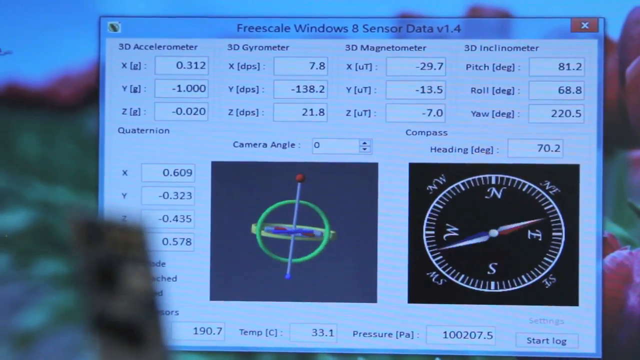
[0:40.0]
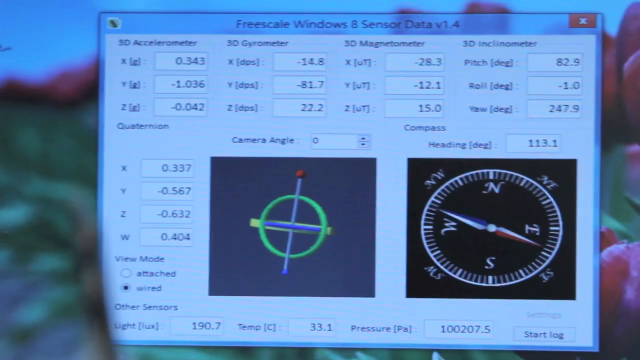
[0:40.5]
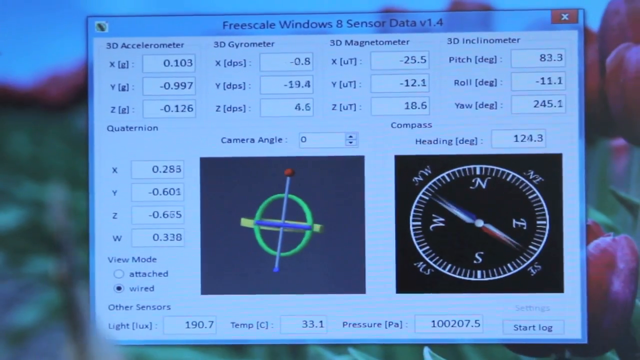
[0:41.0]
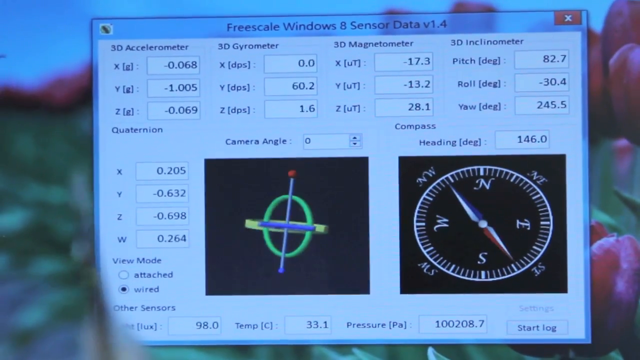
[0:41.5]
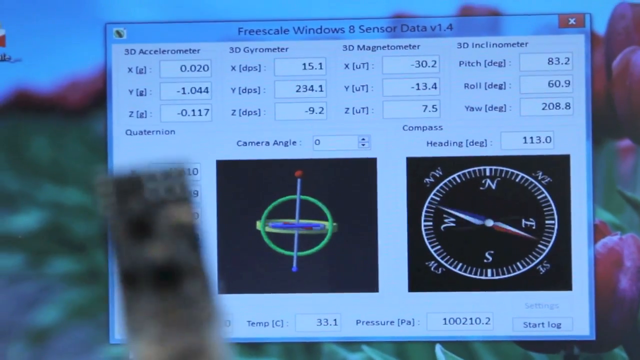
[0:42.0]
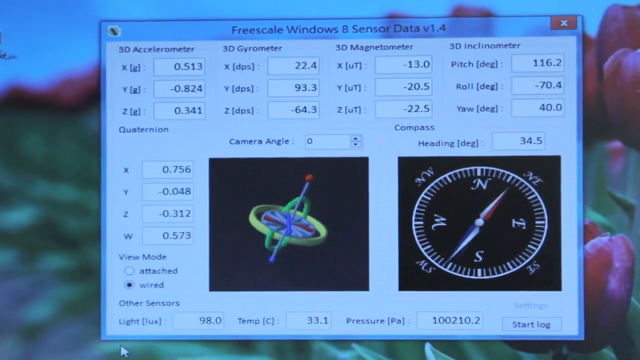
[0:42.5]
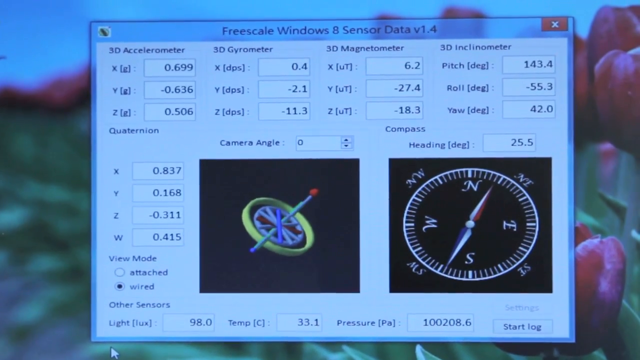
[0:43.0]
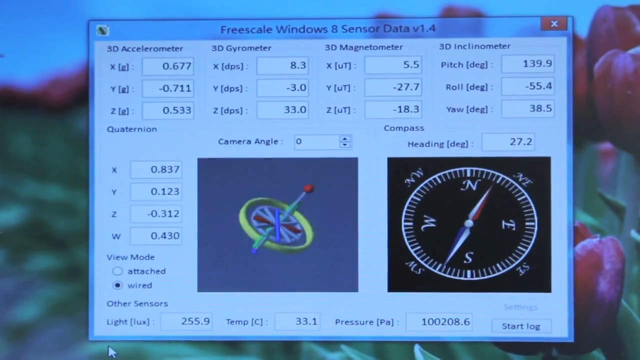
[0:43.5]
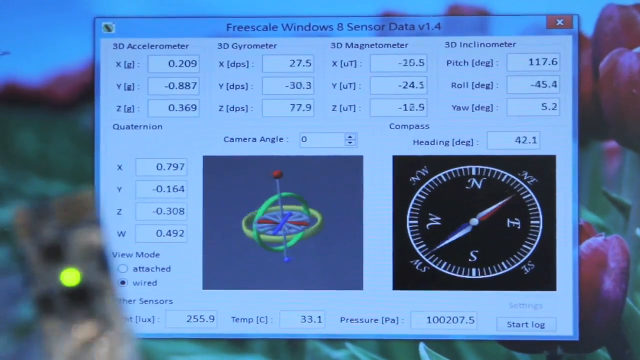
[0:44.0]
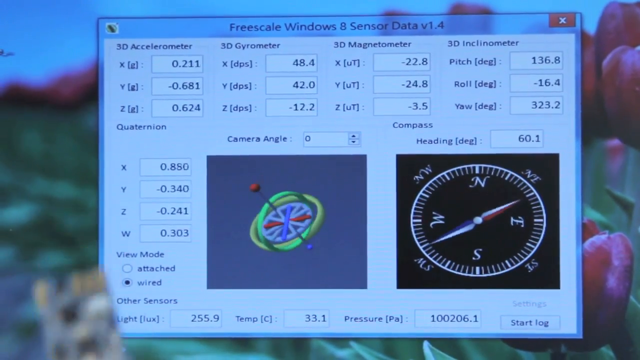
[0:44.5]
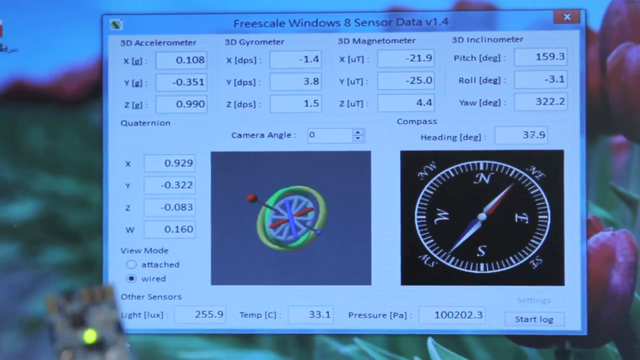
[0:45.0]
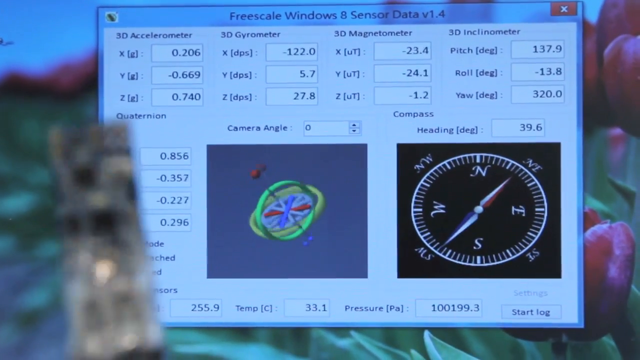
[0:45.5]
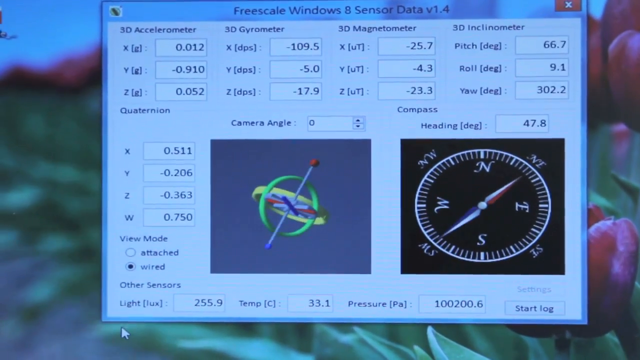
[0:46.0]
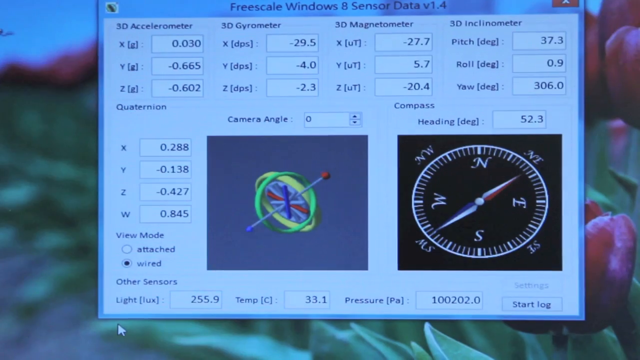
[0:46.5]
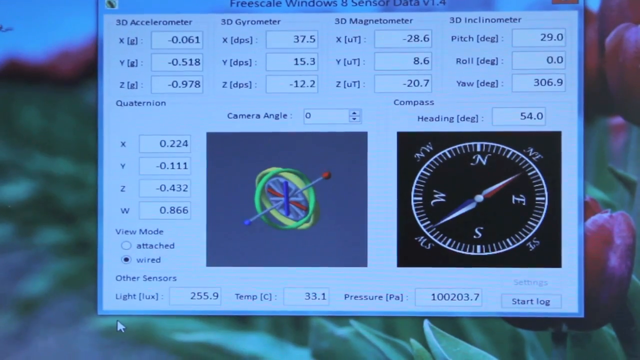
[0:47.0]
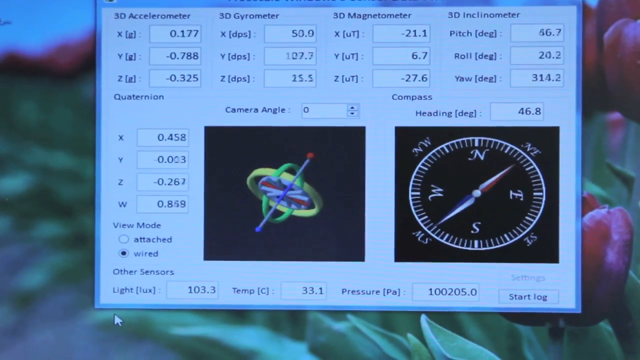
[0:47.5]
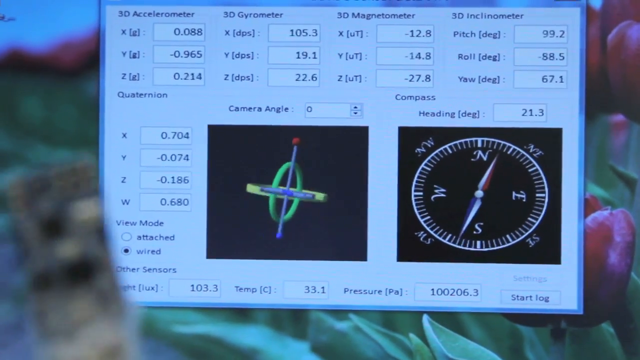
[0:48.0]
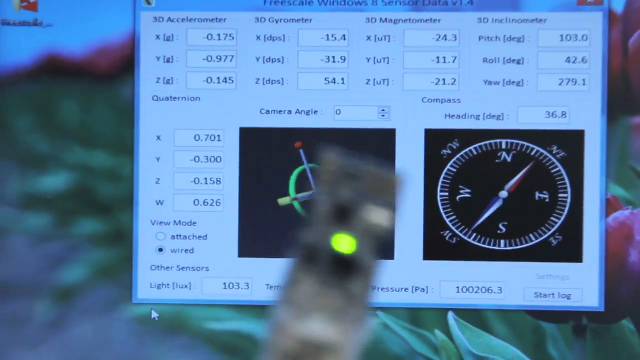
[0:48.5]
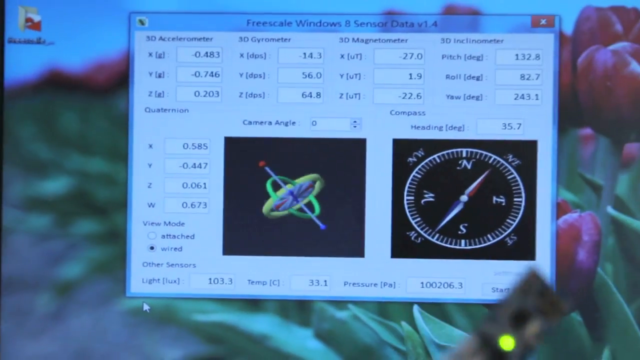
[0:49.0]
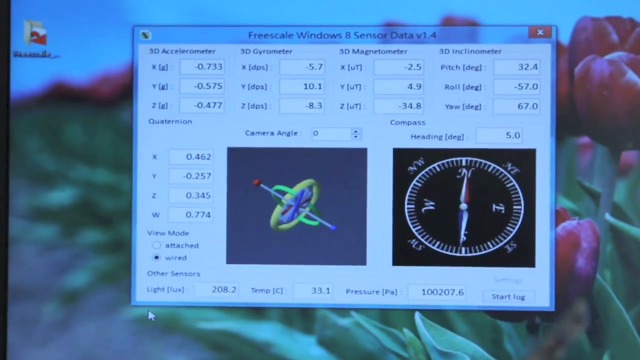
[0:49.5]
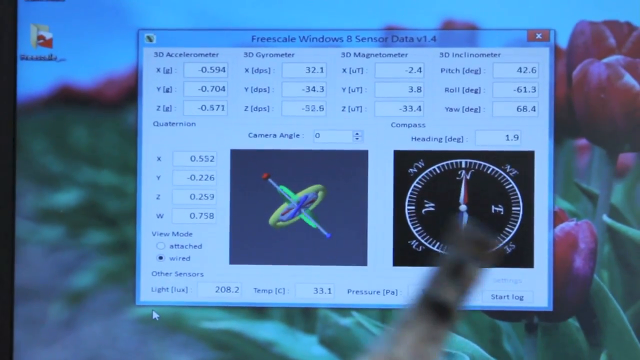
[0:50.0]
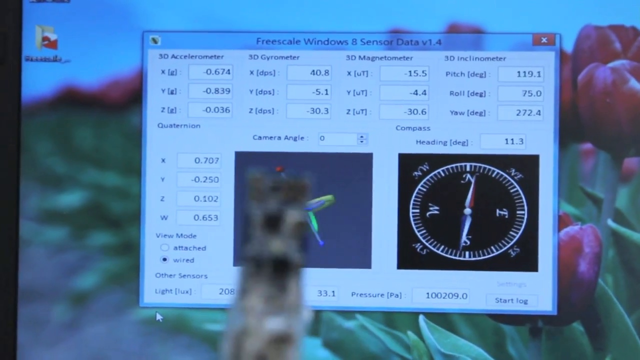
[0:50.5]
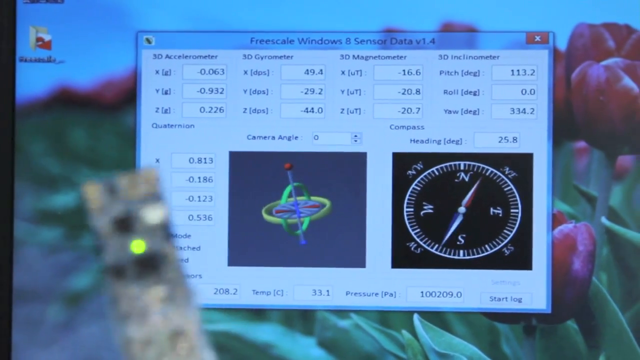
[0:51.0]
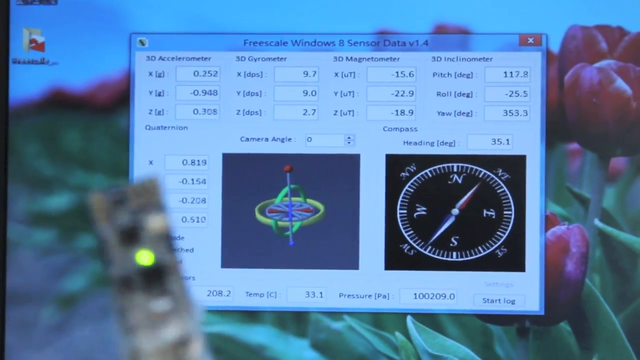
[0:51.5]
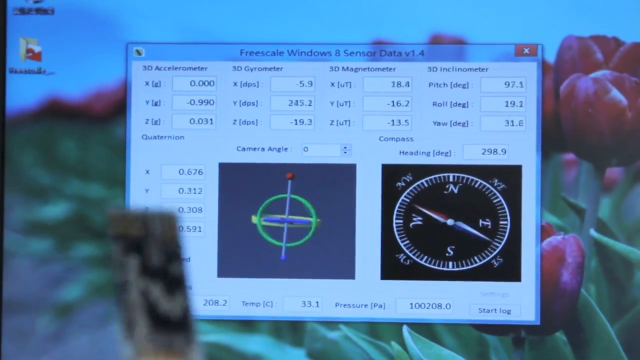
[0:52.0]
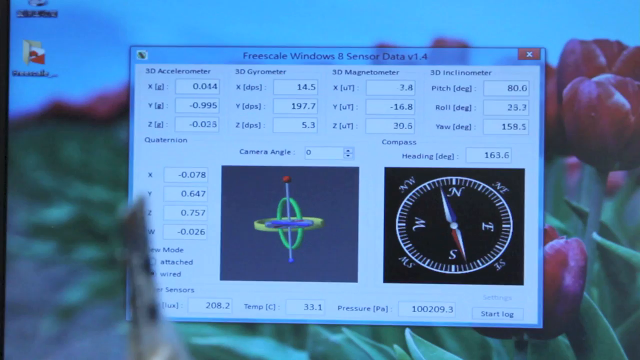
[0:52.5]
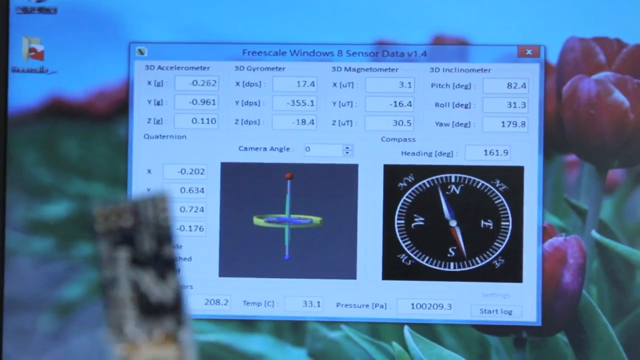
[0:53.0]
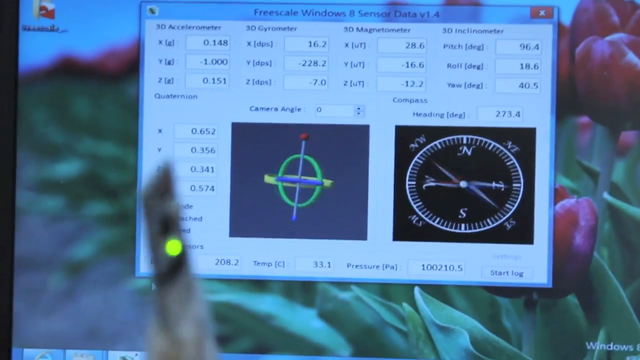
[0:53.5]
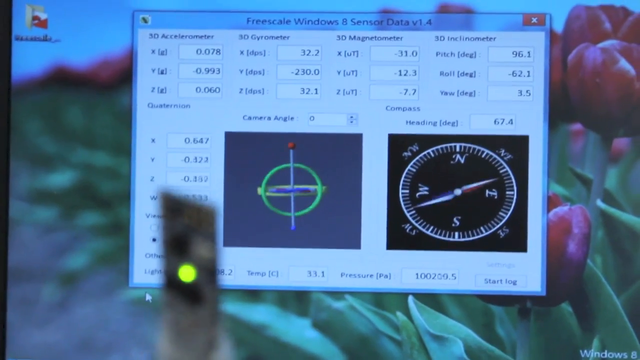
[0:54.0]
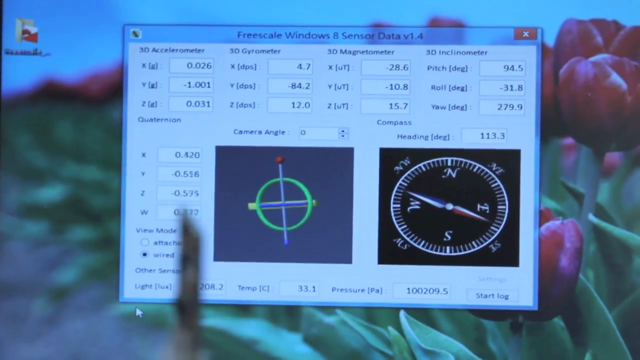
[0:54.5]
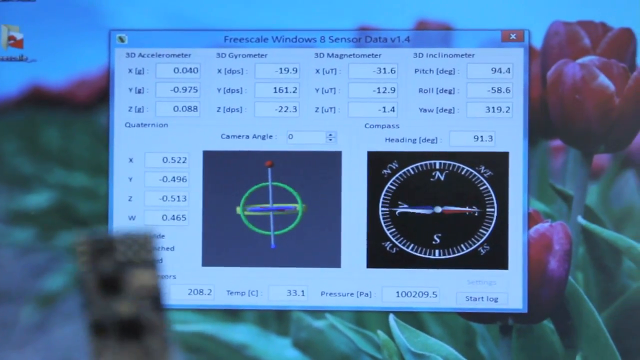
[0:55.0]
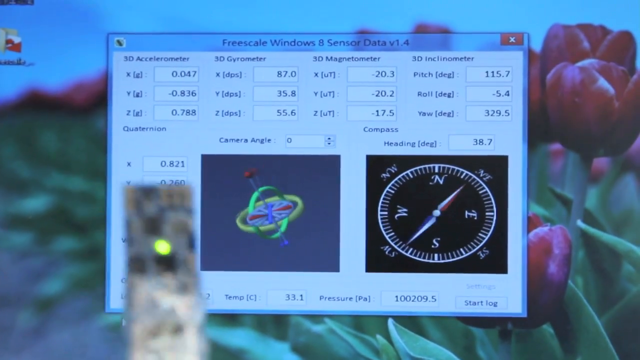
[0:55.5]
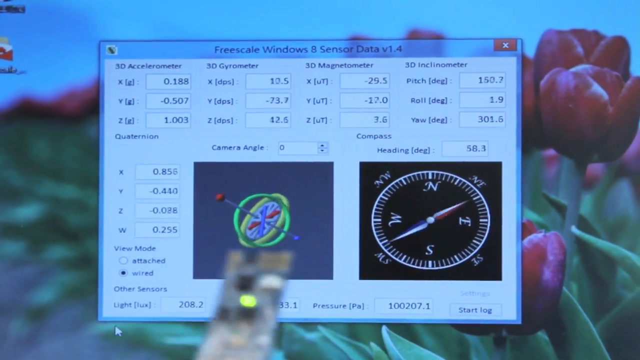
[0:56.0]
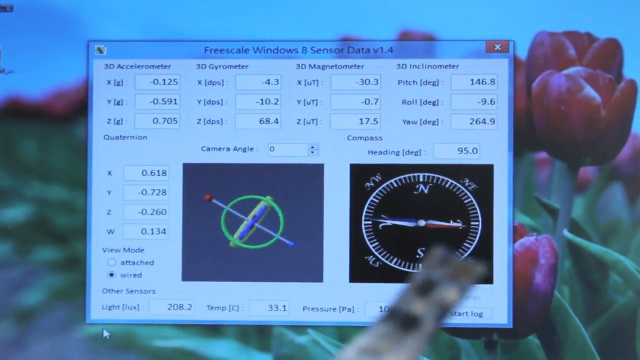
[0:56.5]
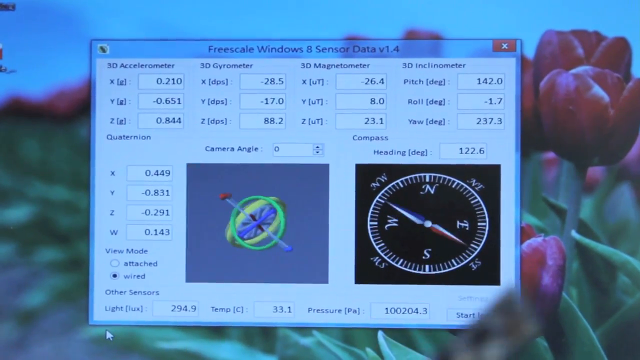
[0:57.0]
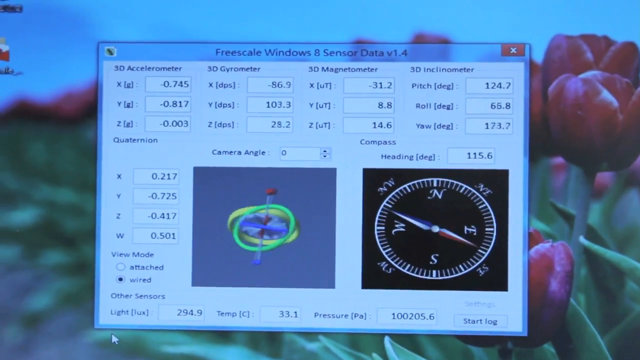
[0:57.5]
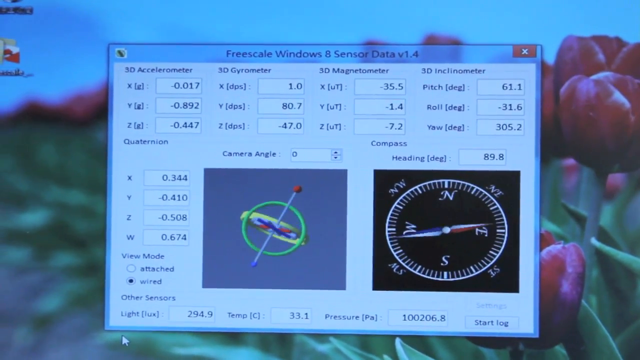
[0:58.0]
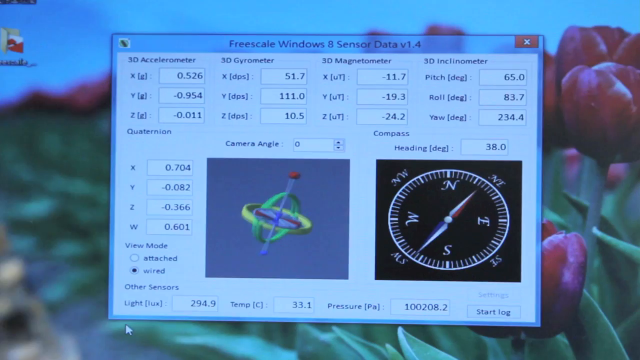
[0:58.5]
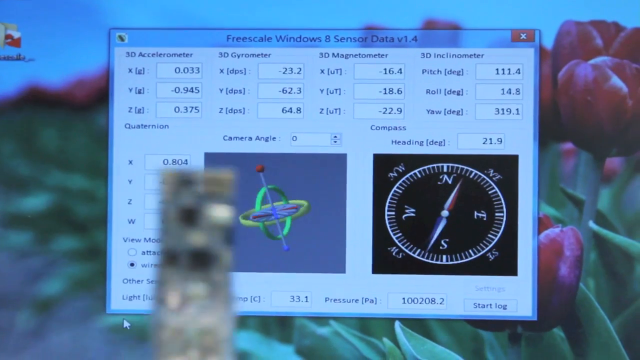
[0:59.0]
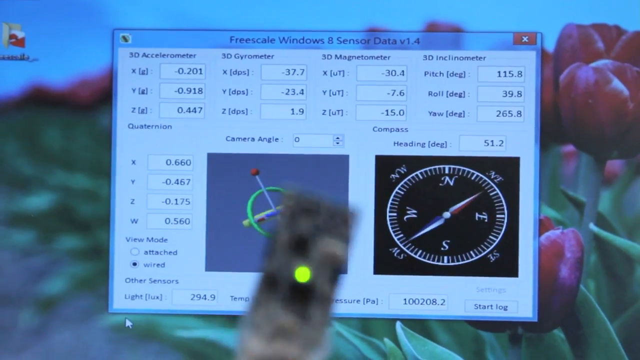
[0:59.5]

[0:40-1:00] The rotating chip is out of focus as the camera zooms on the display of the laptop. The program window is smaller than the desktop, revealing the tulip wallpaper behind it. Inside the open program are the gyroscope and the compass, with several other numbers indicating direction, speed and other calculations. The man continues to wave the chip back and forth, and the instruments in the program reflect the changes. When he spins the chip counterclockwise, then clockwise, then counterclockwise again, the gyroscope on the laptop screen likely spins the same way. The chip appears to have a powerful sensor that conveys its coordinates to the program in real time. The compass likewise spins its needle clockwise, then counterclockwise, and back and forth. The chip remains out of focus, but the hand continues to spin it and manipulate the graphics on the laptop.